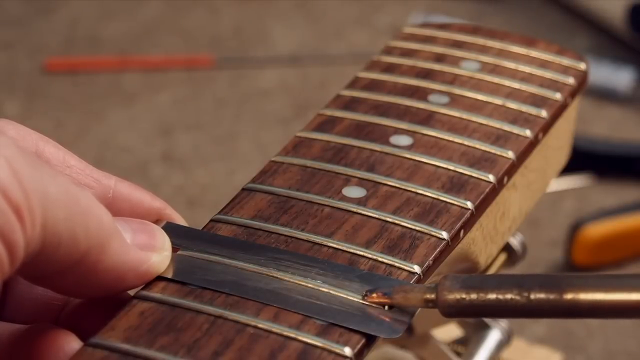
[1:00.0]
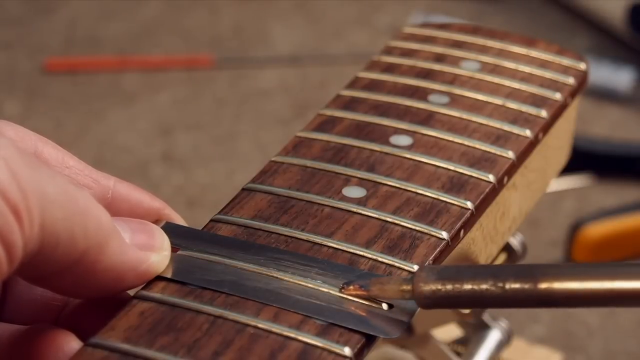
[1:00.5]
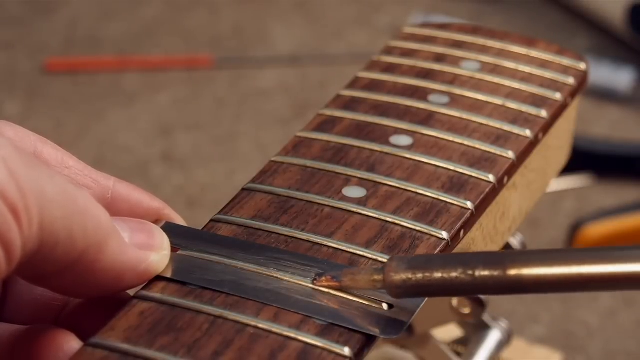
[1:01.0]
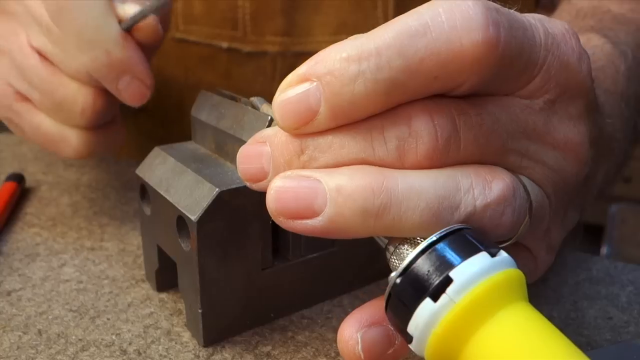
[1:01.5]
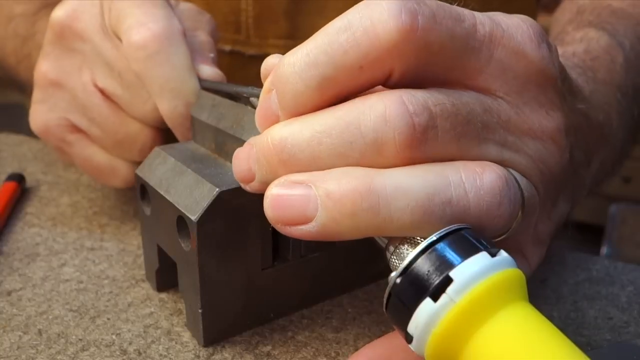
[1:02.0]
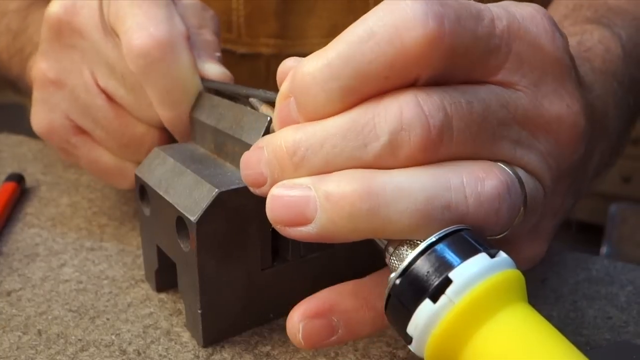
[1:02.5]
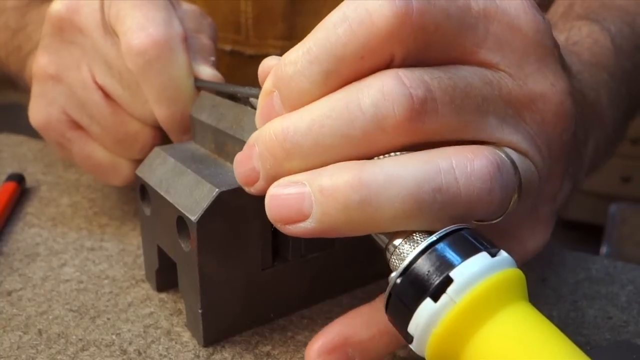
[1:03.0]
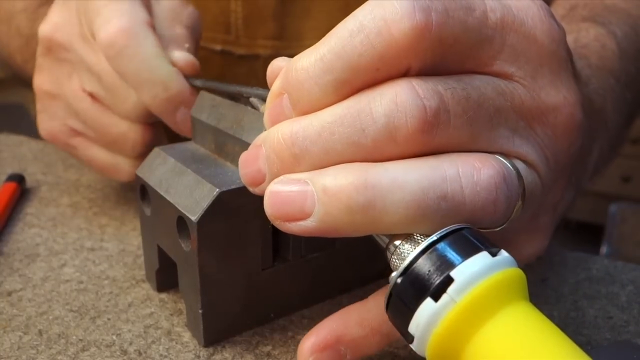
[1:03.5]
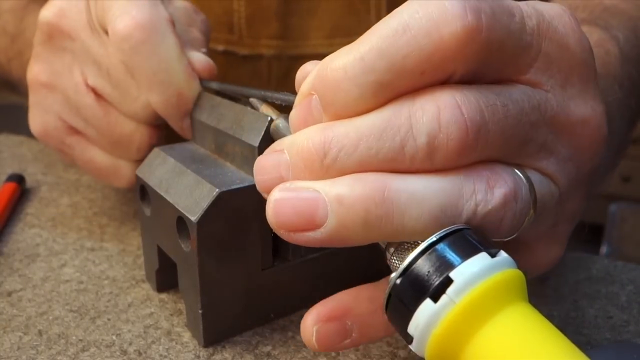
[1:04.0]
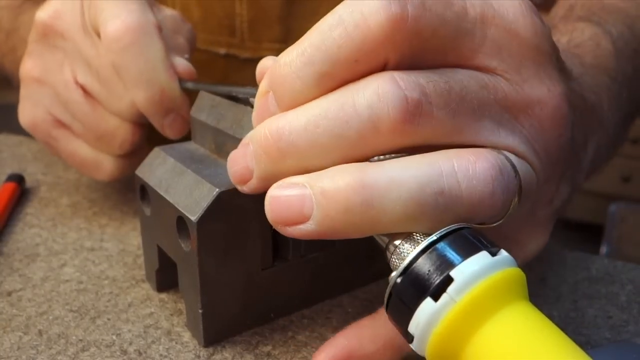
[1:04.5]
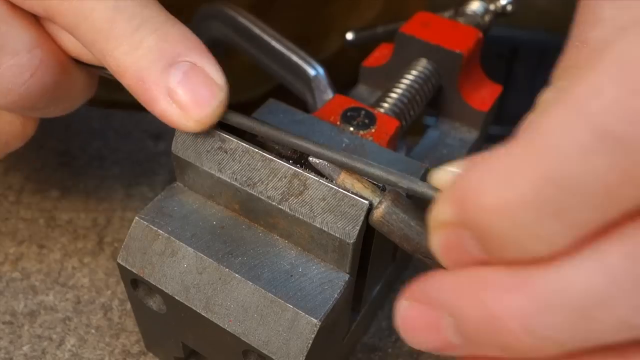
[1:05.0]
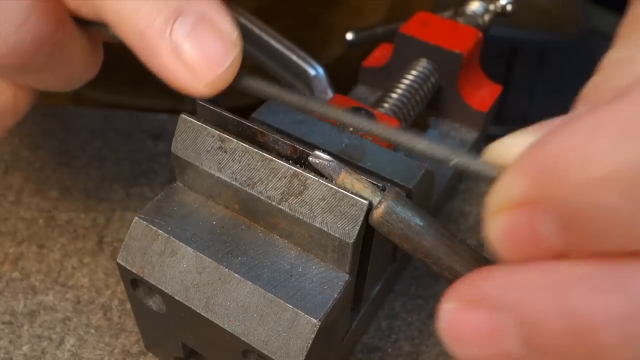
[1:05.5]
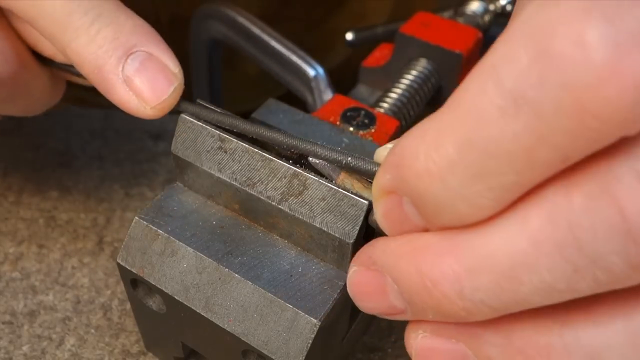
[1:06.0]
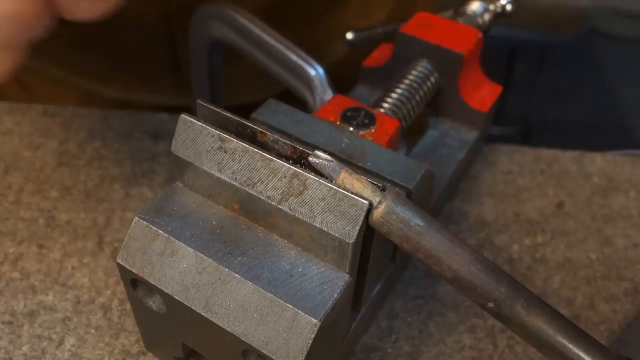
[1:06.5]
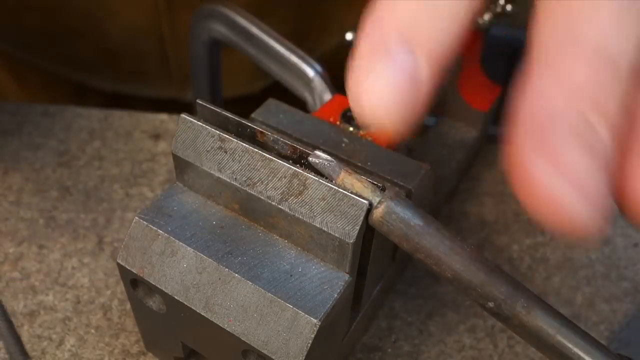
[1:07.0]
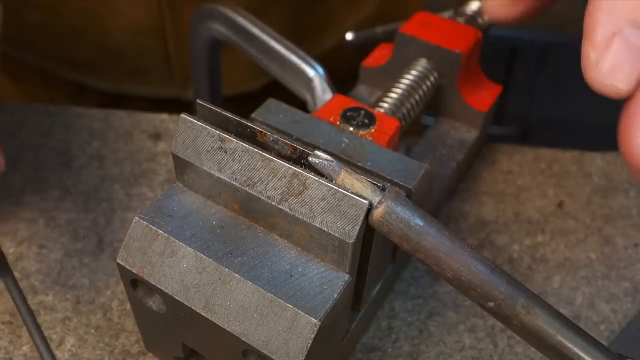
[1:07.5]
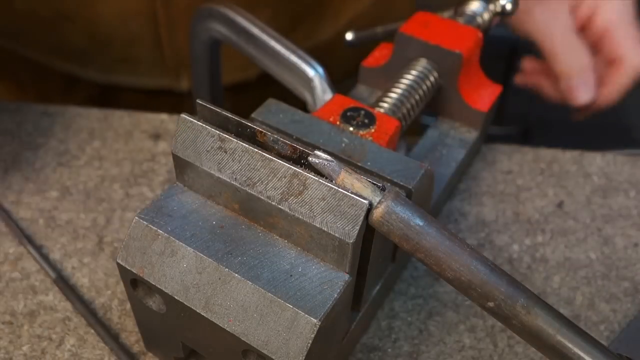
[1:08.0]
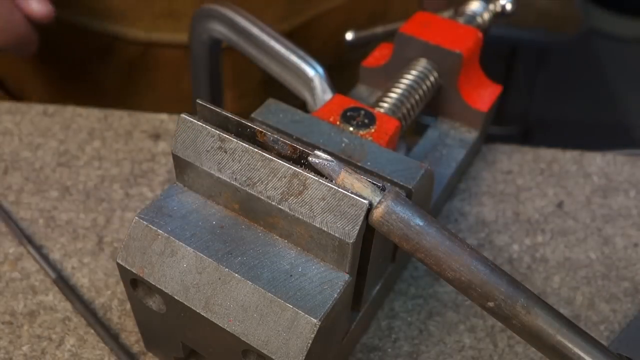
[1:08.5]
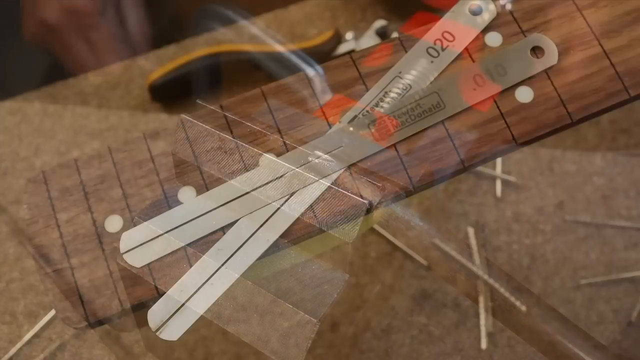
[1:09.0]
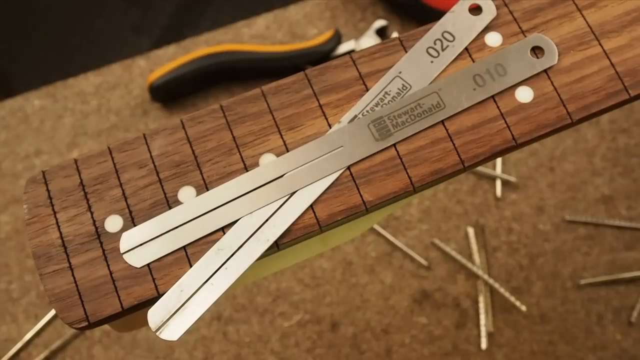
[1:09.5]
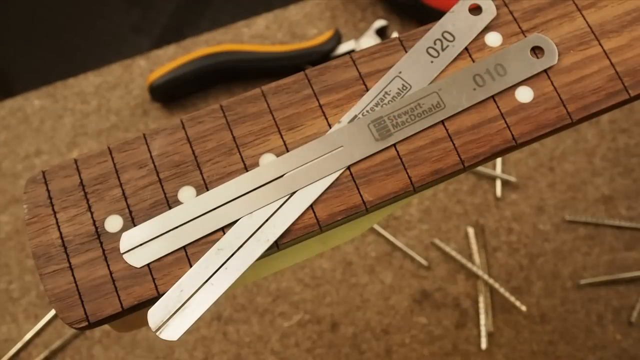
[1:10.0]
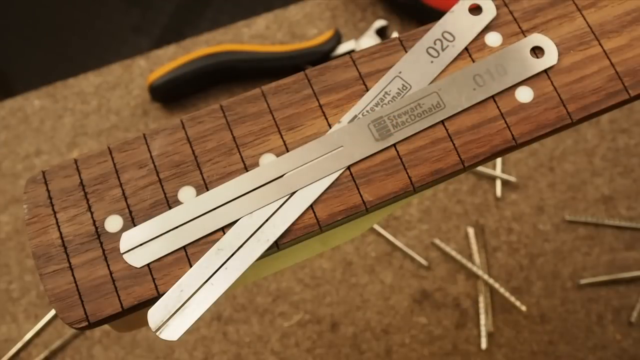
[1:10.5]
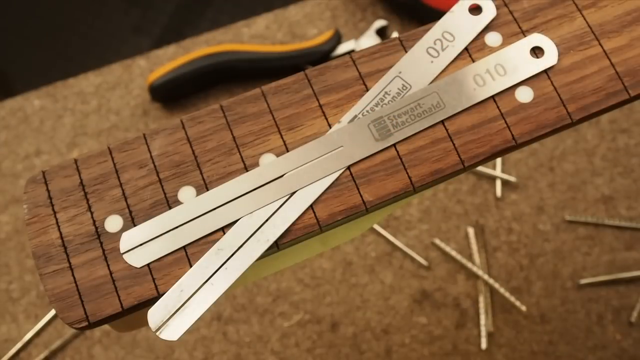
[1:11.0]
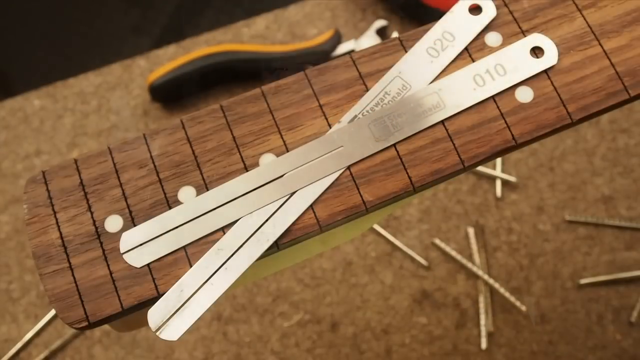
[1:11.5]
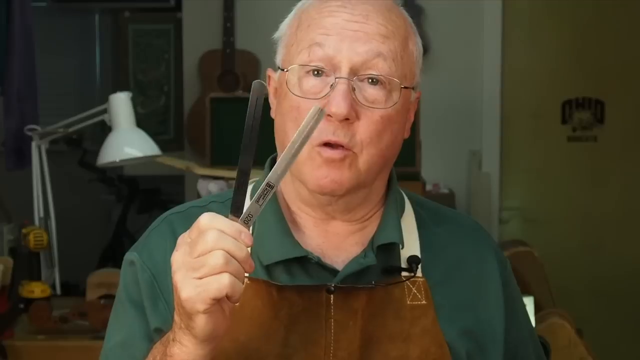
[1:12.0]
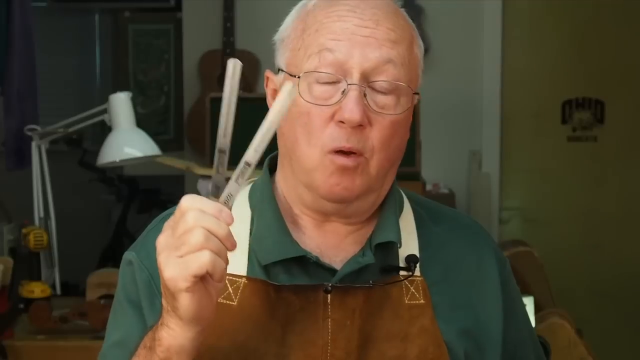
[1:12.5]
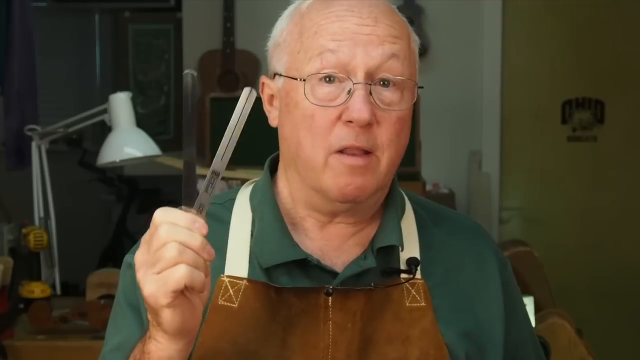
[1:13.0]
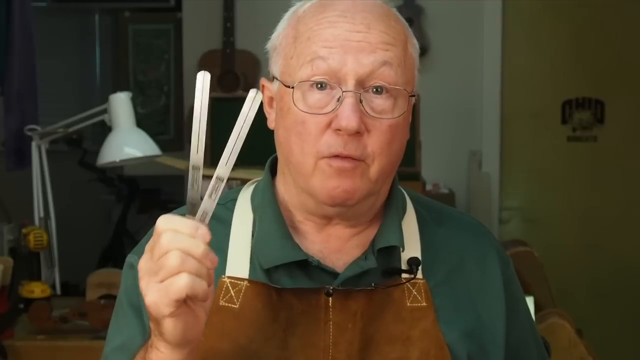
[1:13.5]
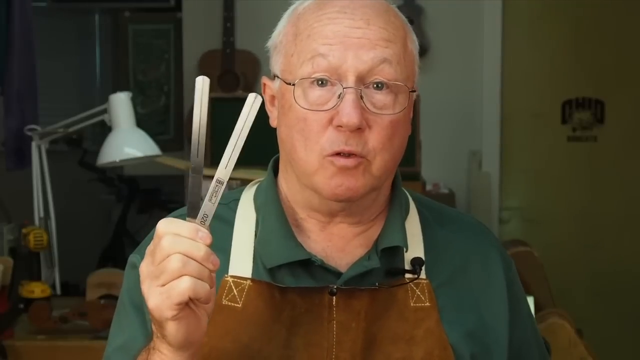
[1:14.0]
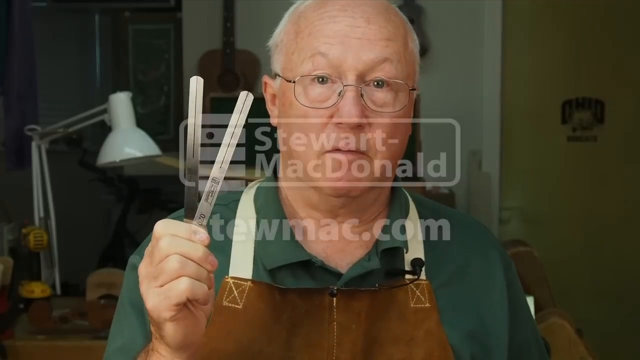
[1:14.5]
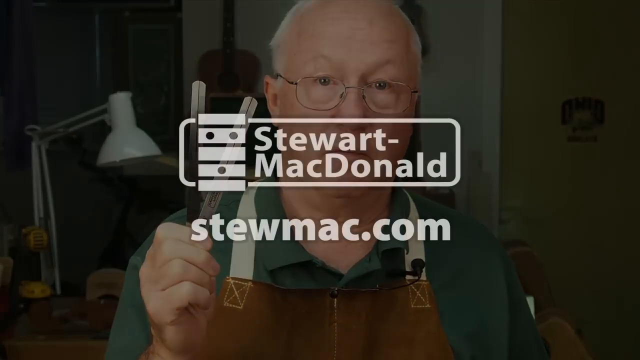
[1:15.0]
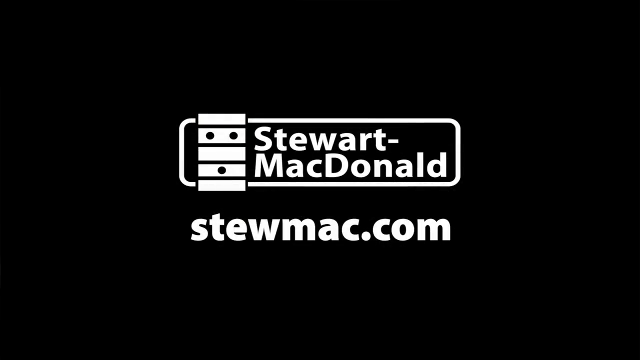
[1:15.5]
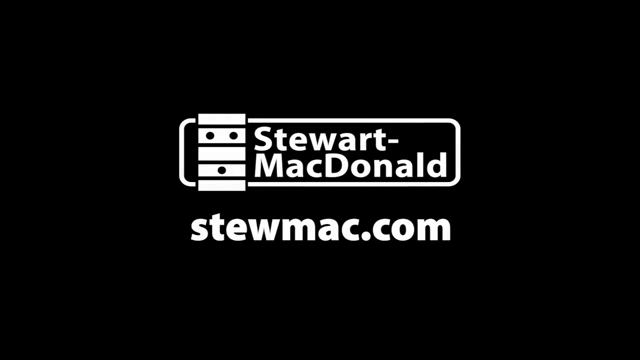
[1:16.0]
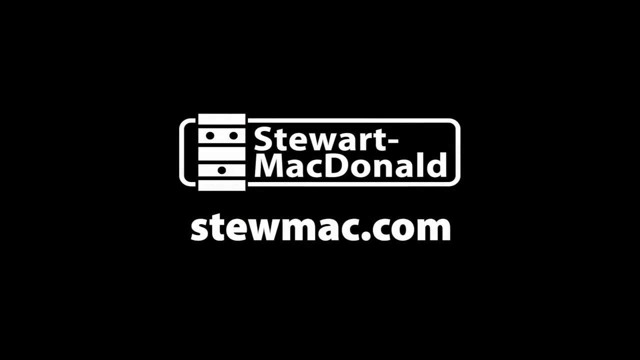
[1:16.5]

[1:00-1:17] The man continues making what he is making. At the end, the name Stuart Macdonald is shown, along with where to find him: "StuartMac.com".